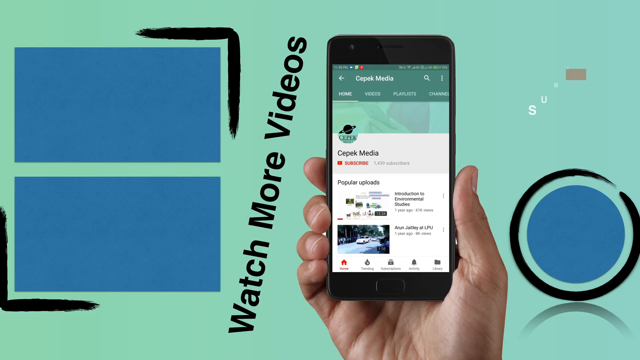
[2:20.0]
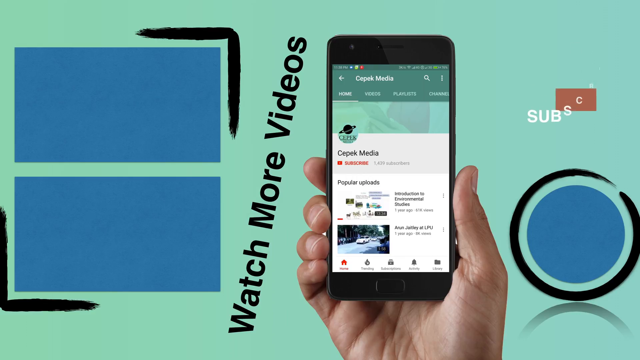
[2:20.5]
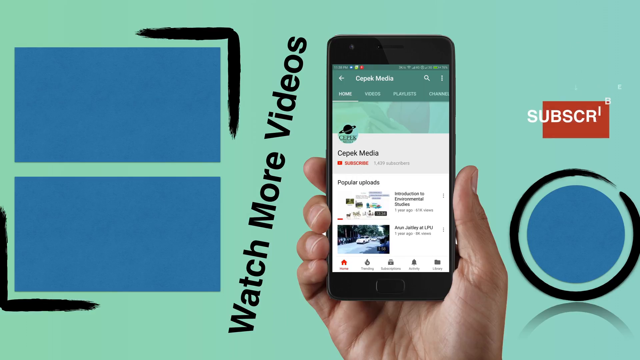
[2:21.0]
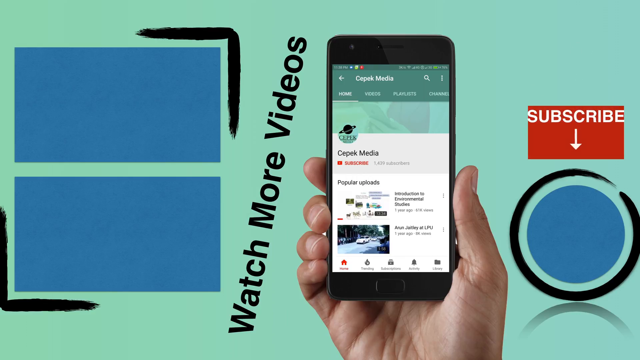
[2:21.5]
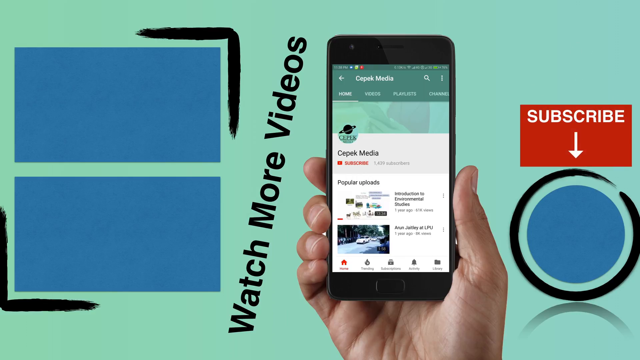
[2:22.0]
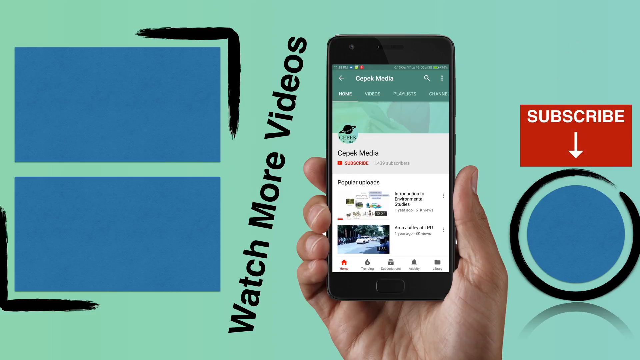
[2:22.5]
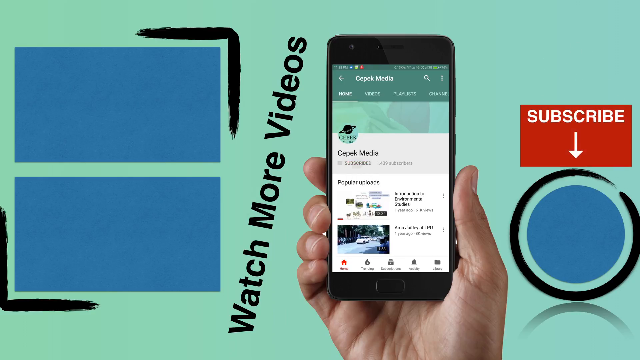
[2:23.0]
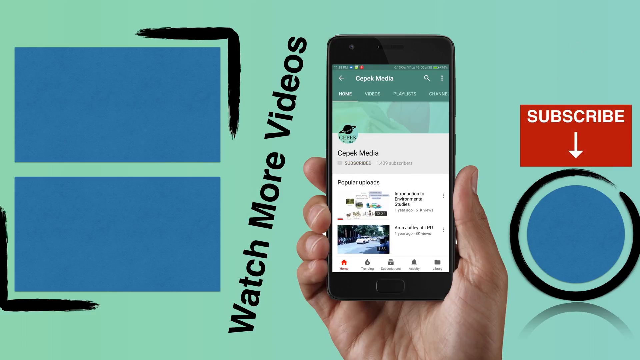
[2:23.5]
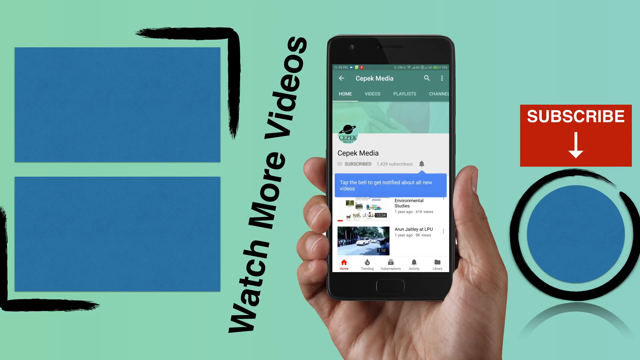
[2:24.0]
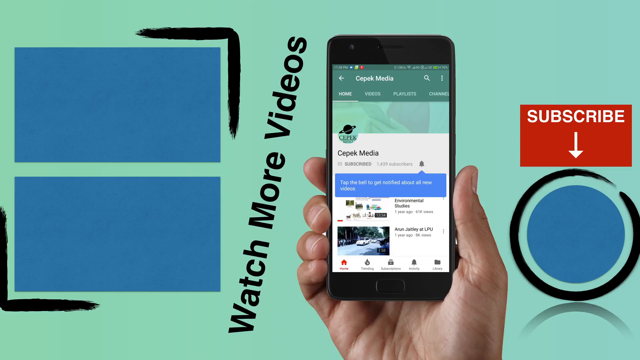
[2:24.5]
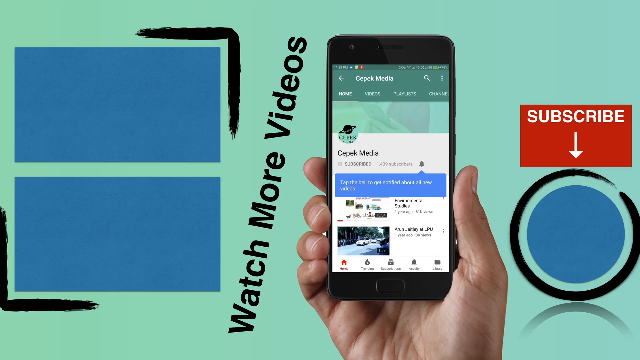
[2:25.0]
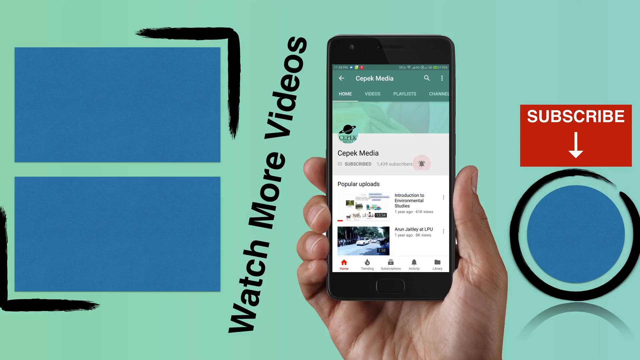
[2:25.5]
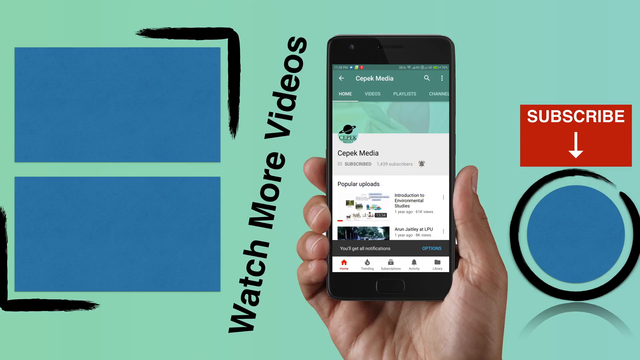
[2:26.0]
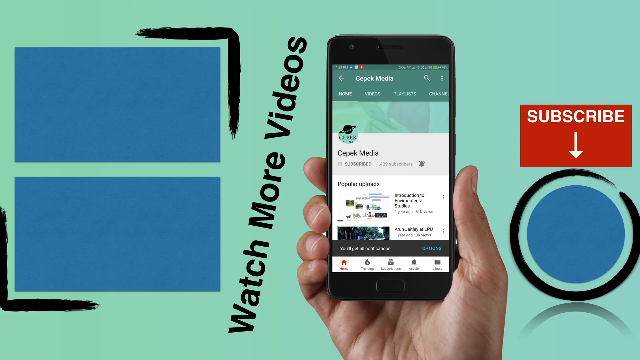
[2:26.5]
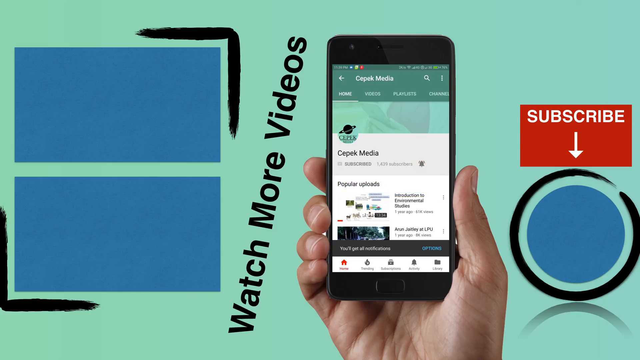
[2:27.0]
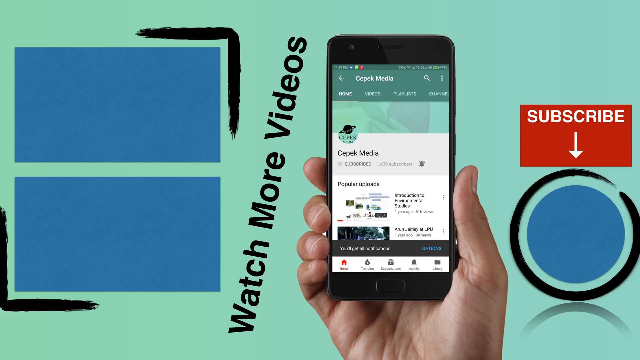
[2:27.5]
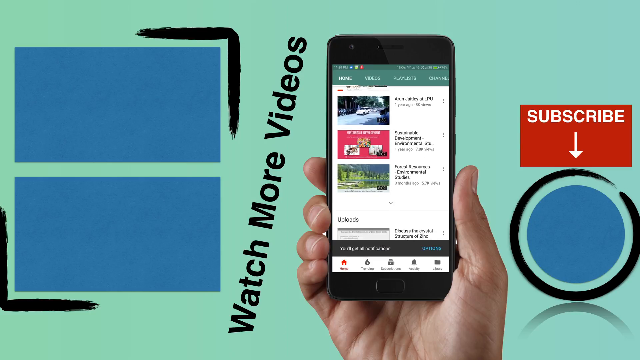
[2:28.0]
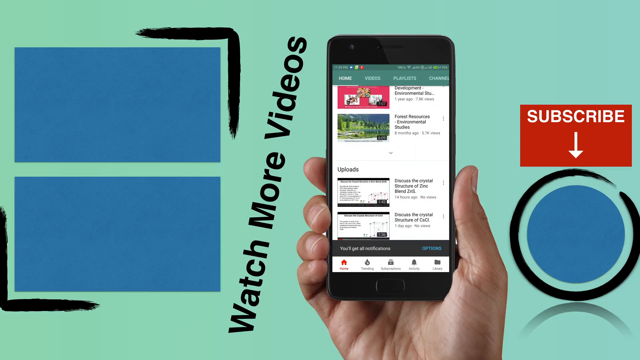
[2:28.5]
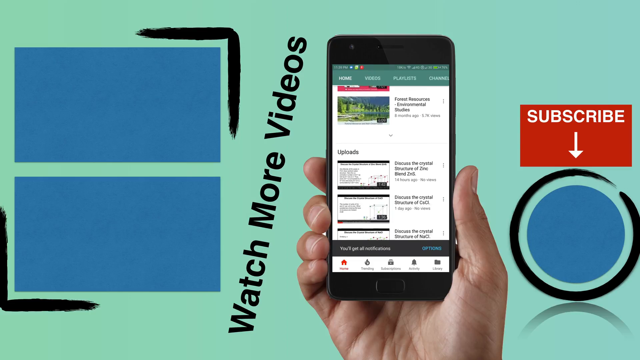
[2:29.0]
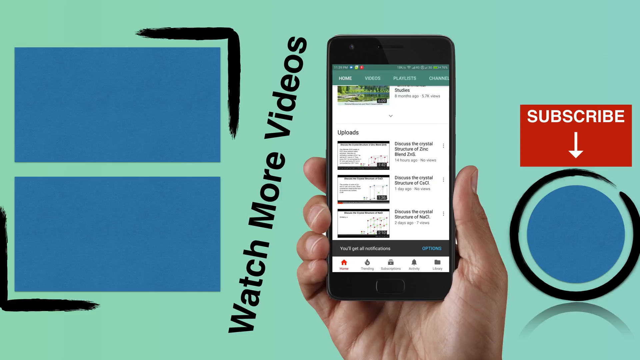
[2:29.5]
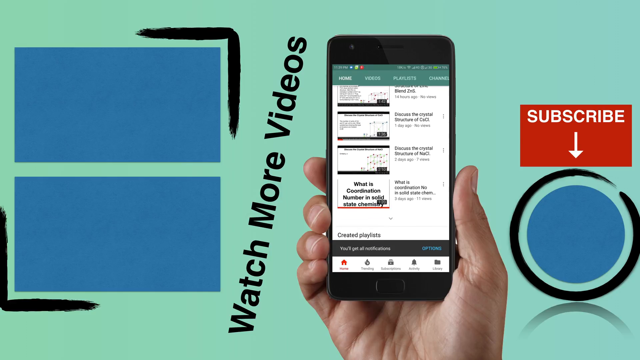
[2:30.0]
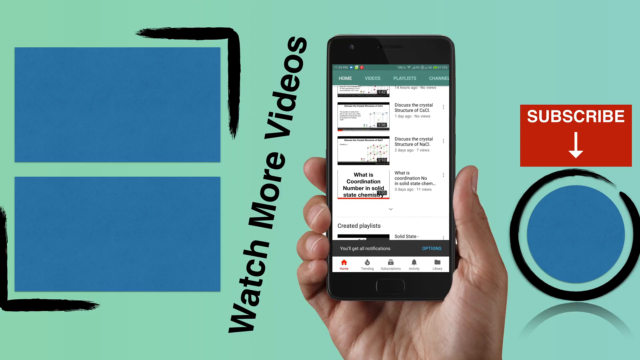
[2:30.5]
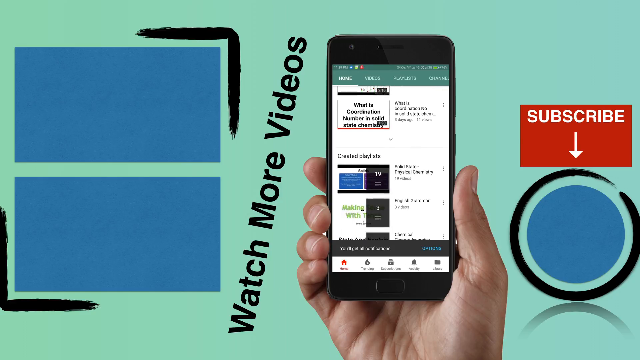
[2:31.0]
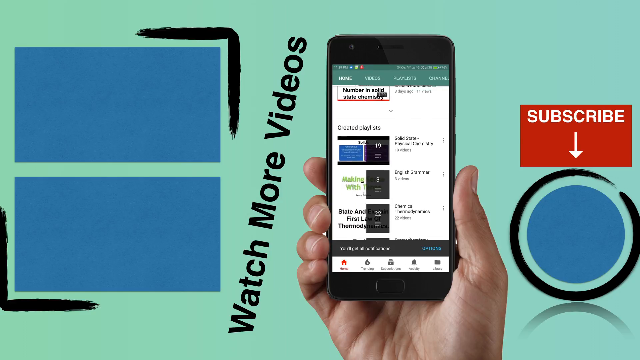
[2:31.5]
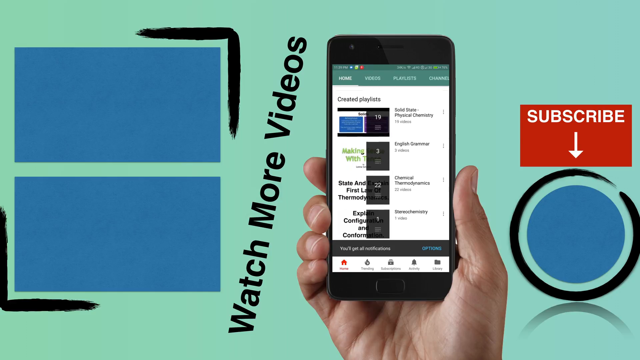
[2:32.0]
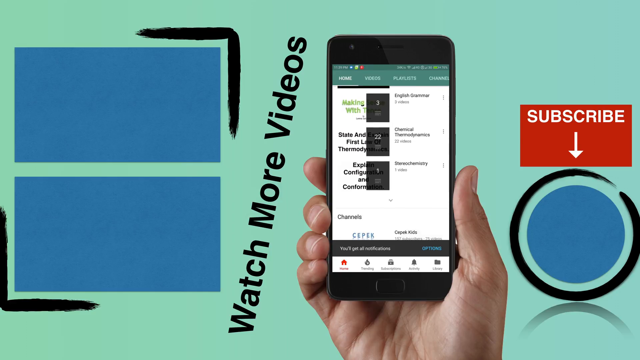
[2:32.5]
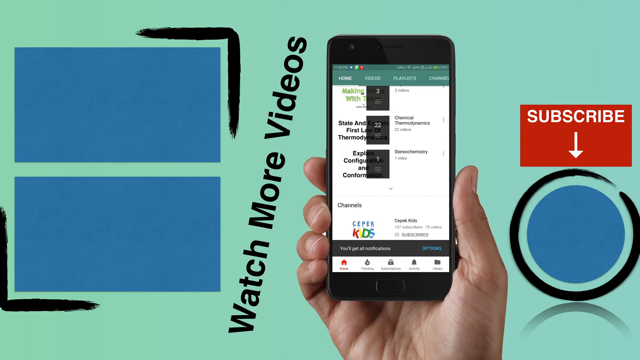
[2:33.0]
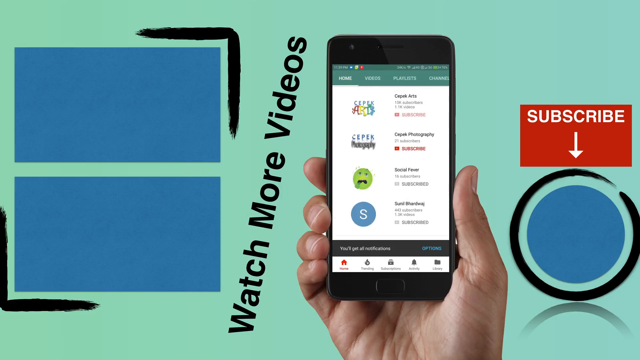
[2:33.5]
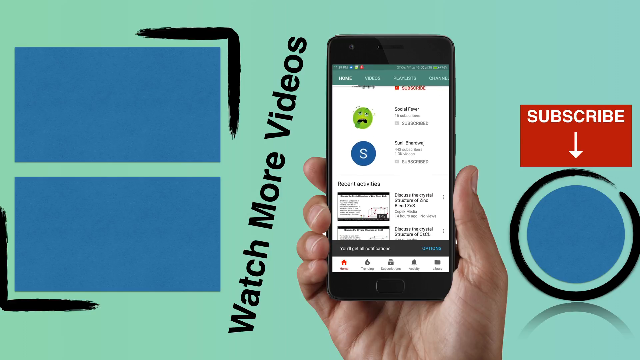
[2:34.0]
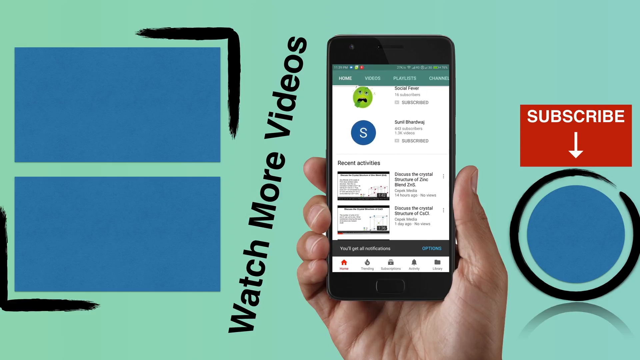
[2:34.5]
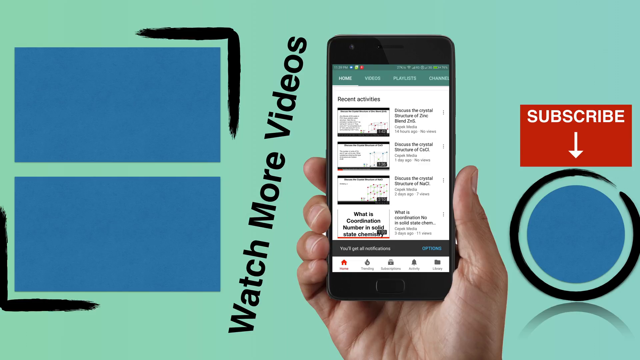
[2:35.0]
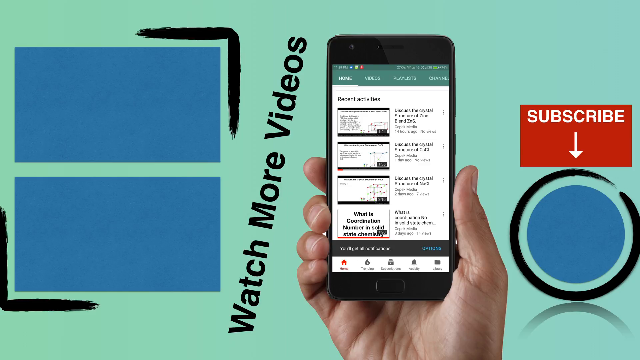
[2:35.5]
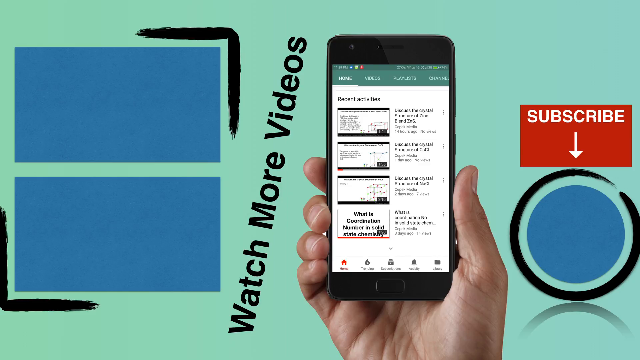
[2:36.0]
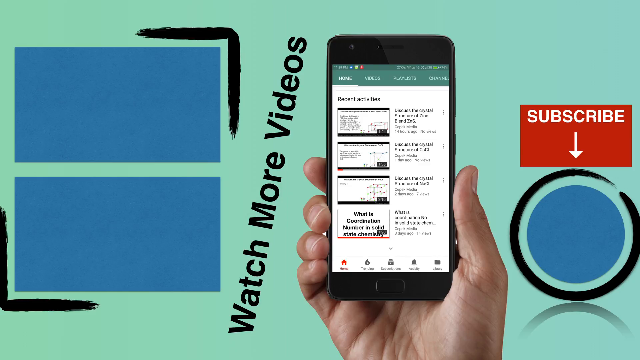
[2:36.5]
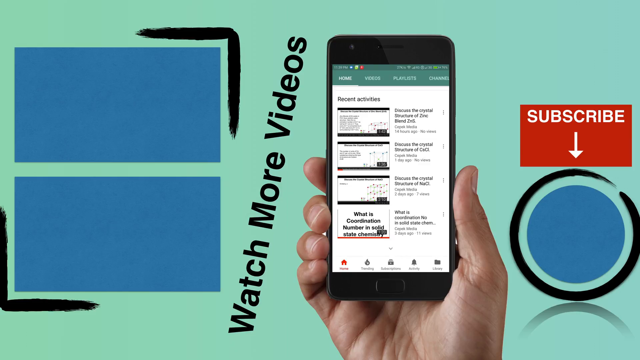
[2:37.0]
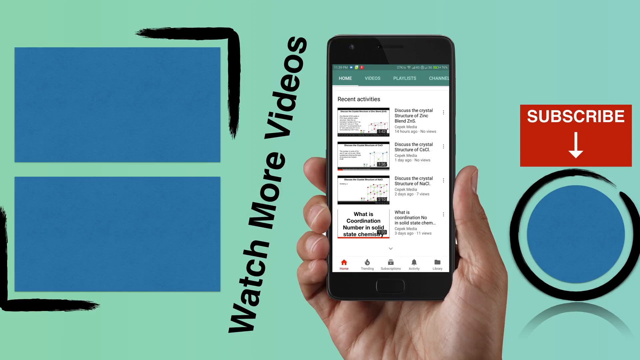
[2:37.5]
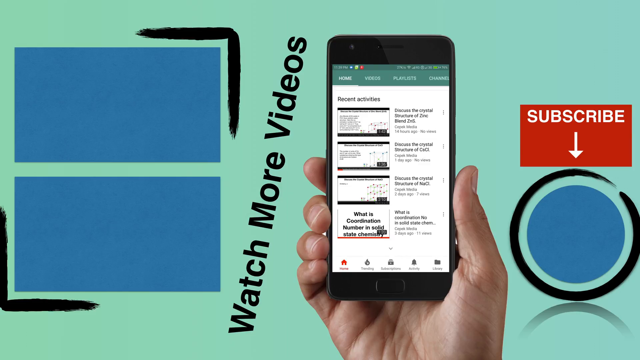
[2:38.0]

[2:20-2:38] The video continues its demonstration of how colloidal solutions behave under a microscope, covering the three processes: Brownian movement, diffusion and sedimentation.